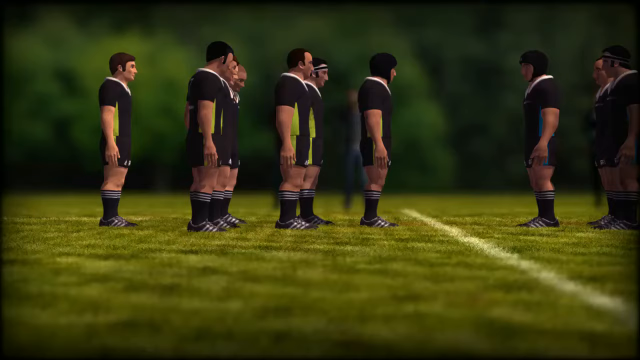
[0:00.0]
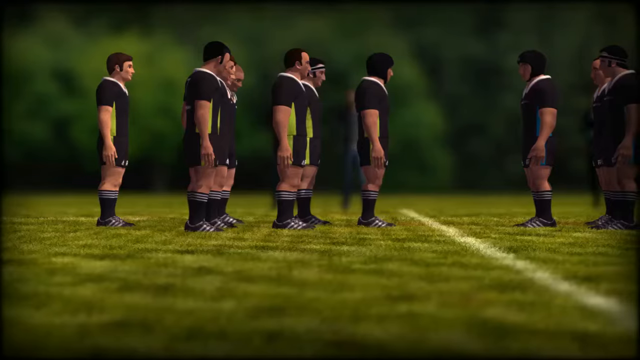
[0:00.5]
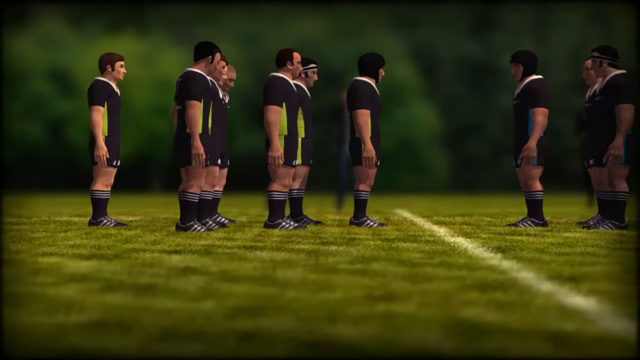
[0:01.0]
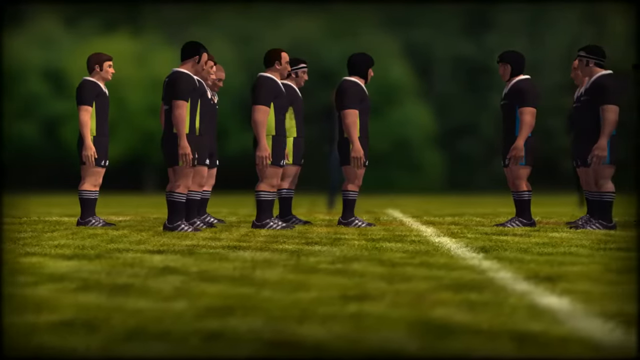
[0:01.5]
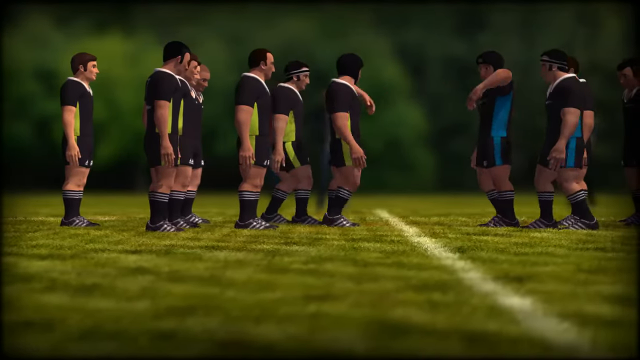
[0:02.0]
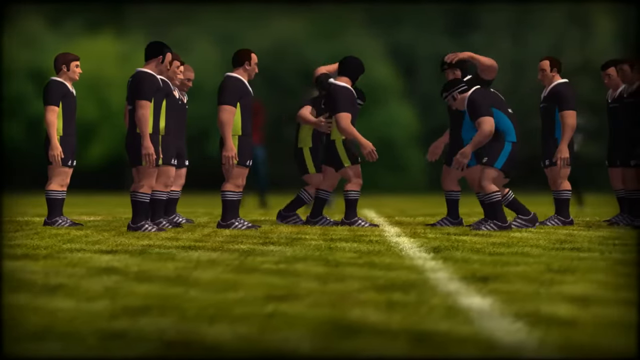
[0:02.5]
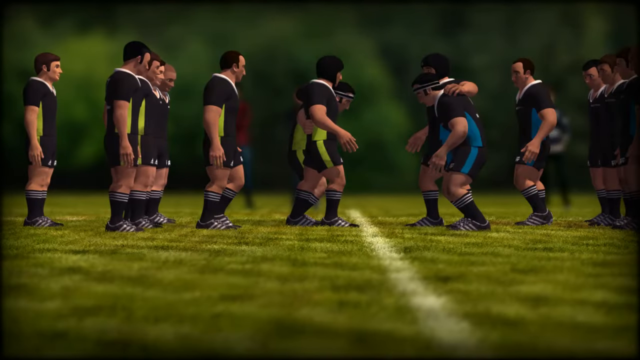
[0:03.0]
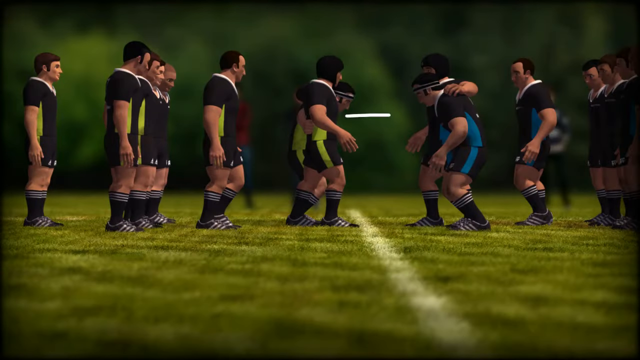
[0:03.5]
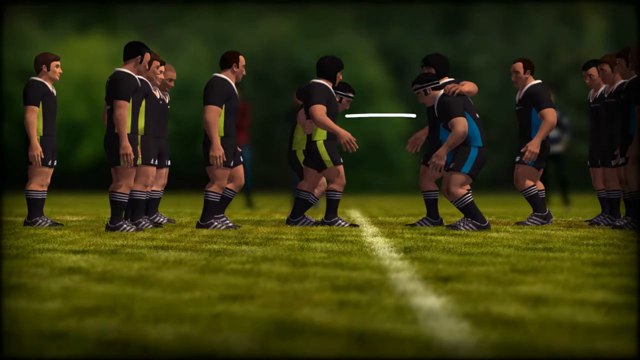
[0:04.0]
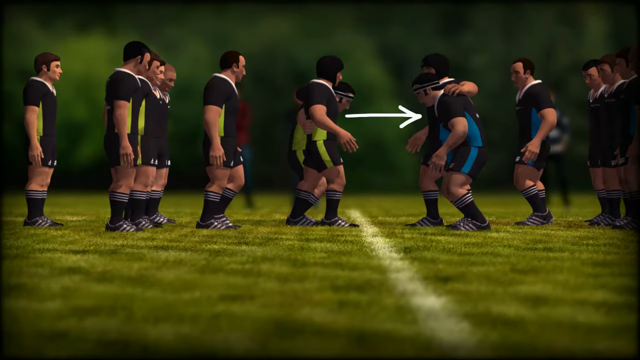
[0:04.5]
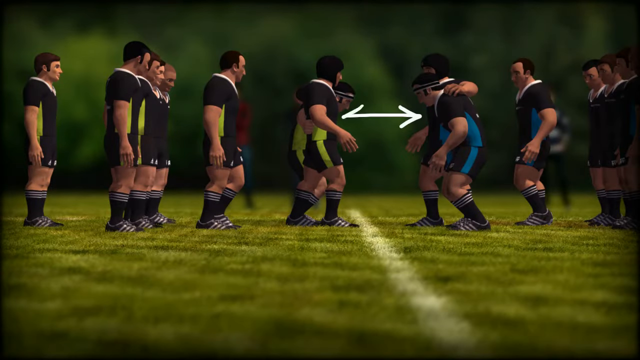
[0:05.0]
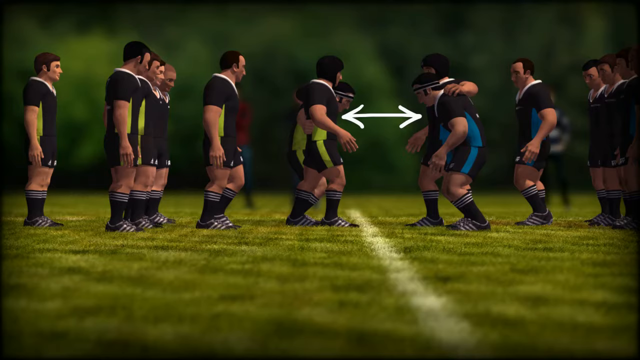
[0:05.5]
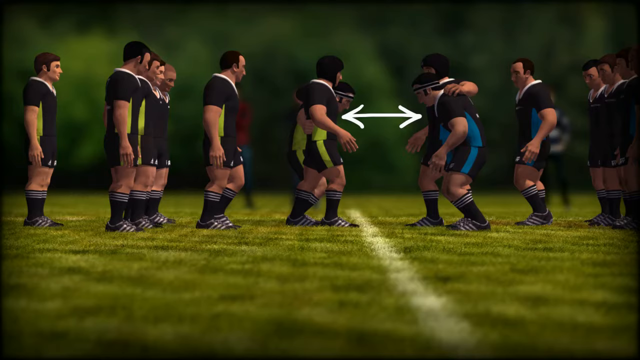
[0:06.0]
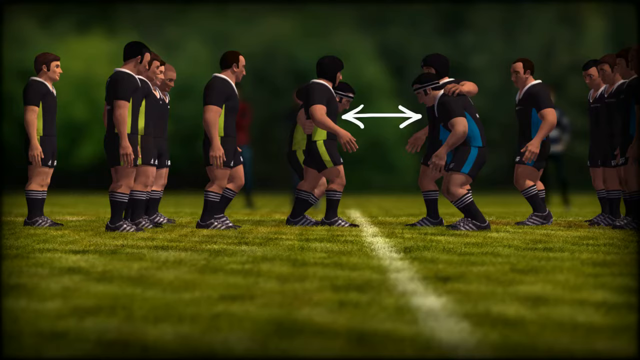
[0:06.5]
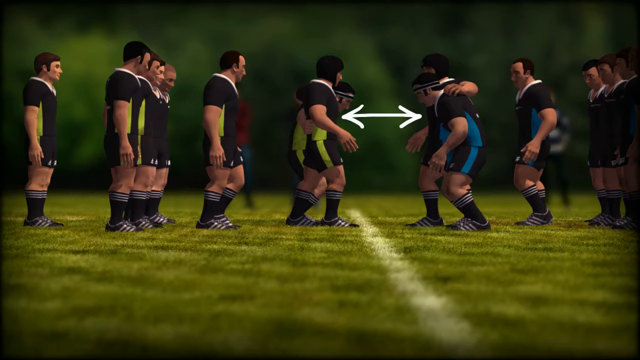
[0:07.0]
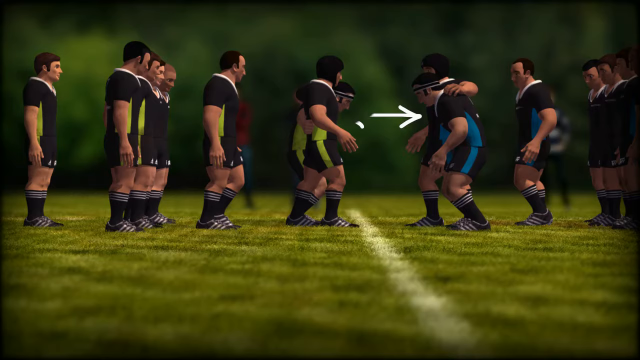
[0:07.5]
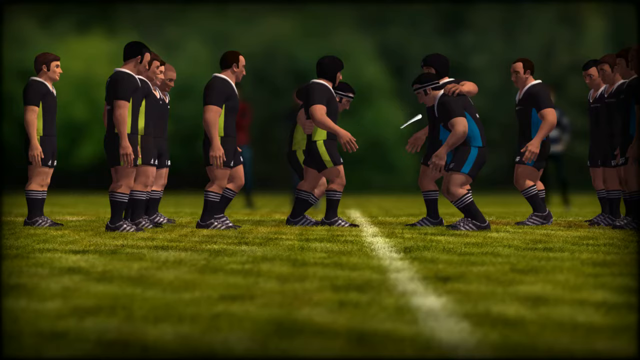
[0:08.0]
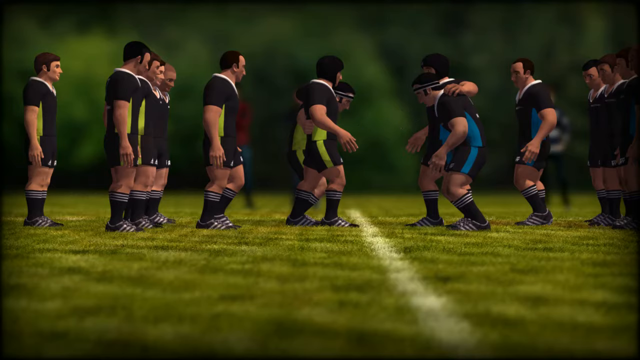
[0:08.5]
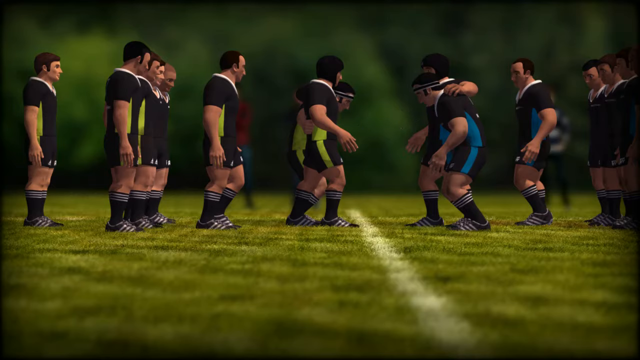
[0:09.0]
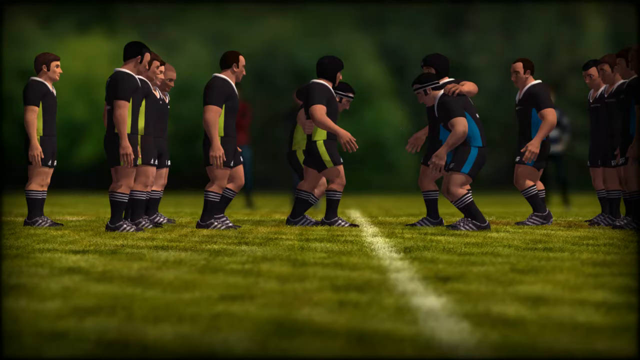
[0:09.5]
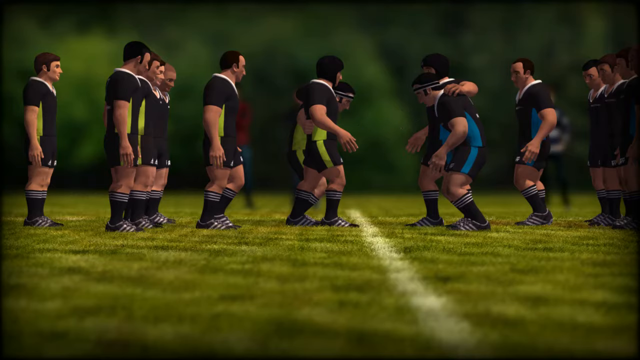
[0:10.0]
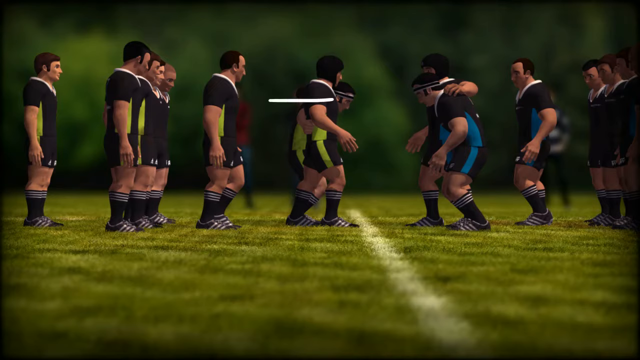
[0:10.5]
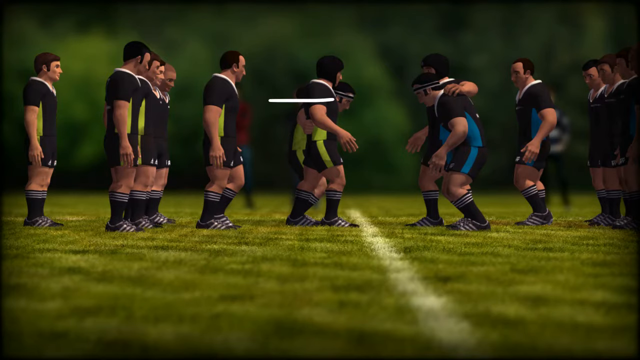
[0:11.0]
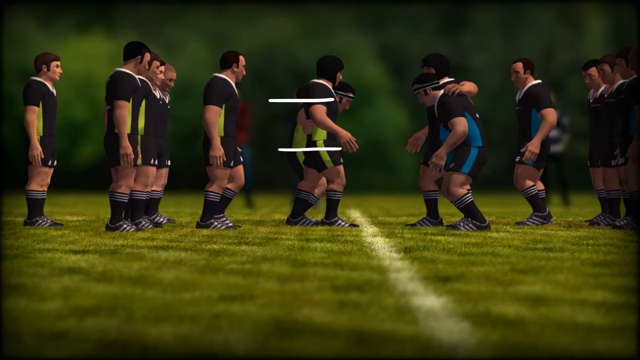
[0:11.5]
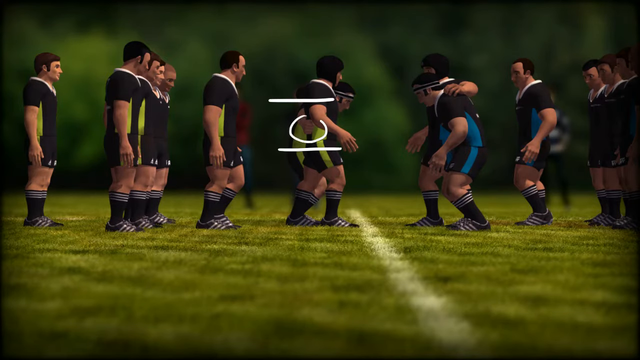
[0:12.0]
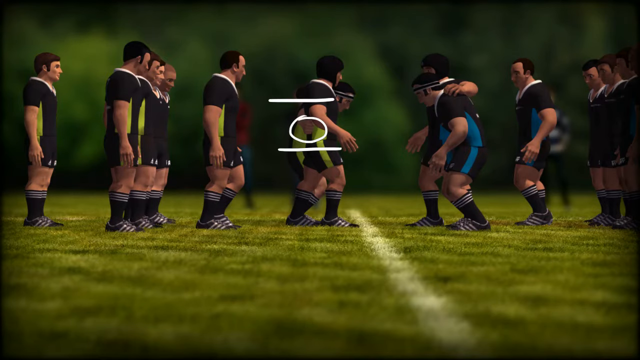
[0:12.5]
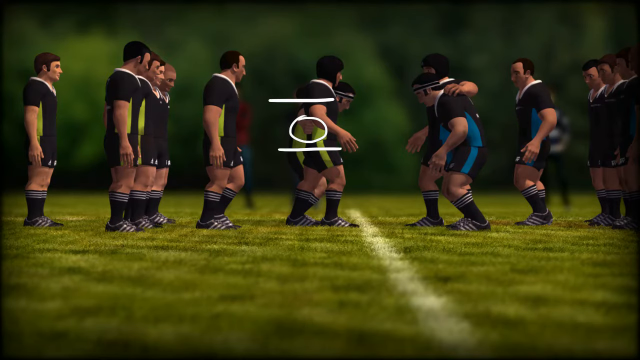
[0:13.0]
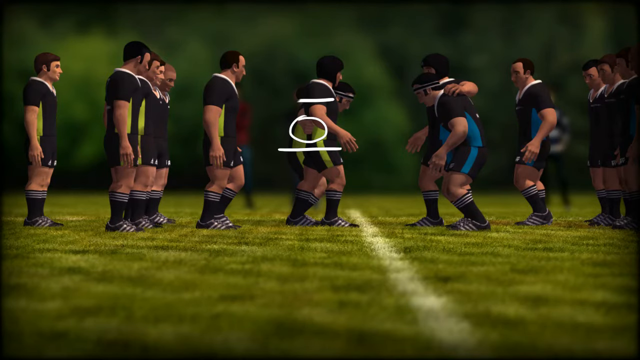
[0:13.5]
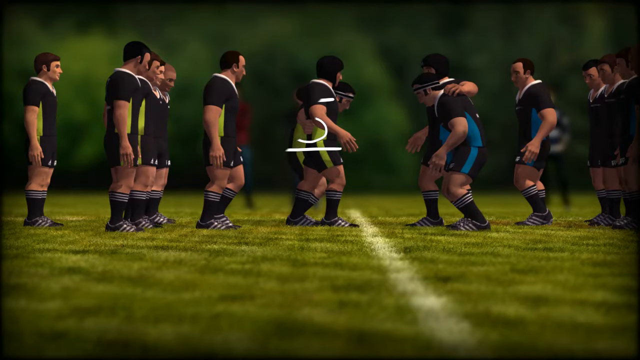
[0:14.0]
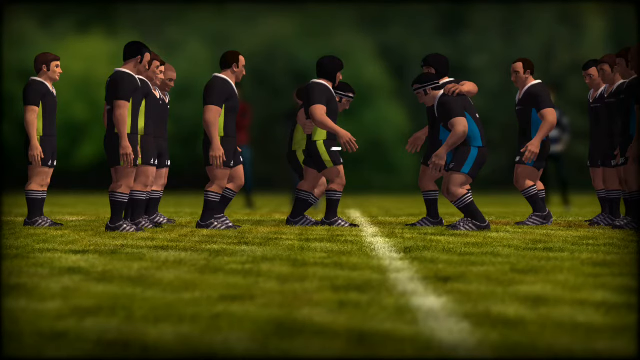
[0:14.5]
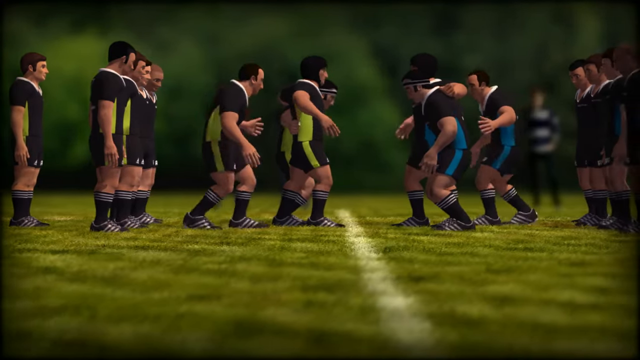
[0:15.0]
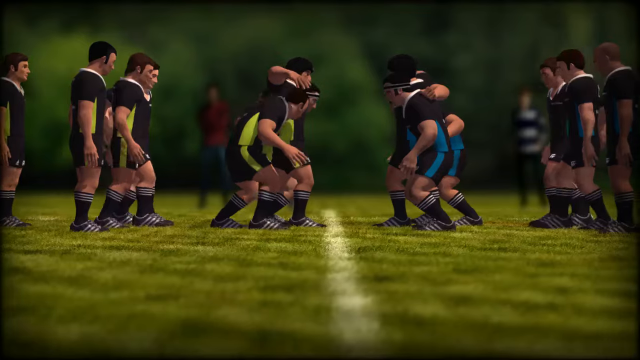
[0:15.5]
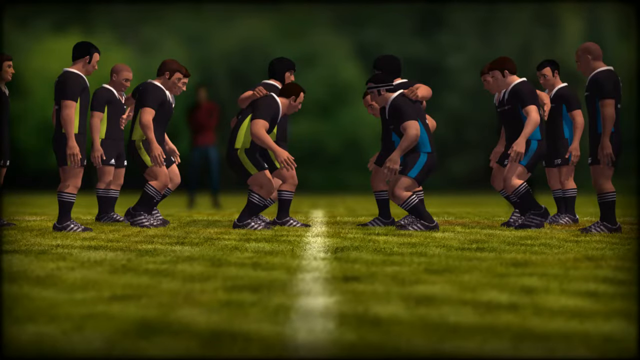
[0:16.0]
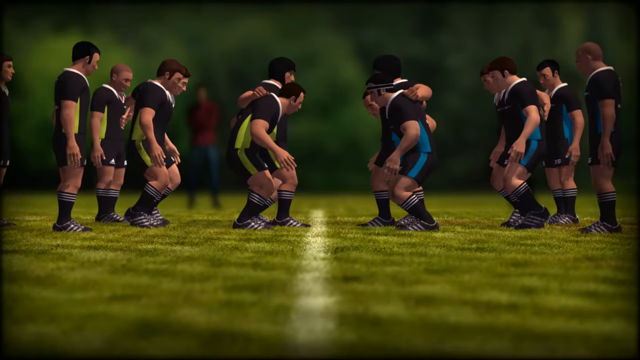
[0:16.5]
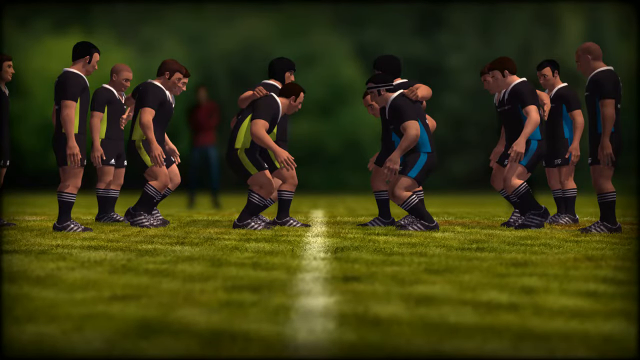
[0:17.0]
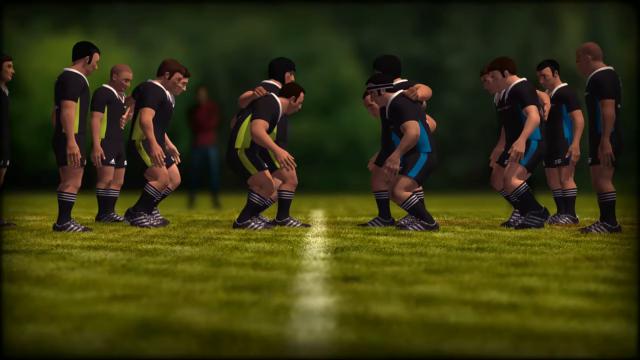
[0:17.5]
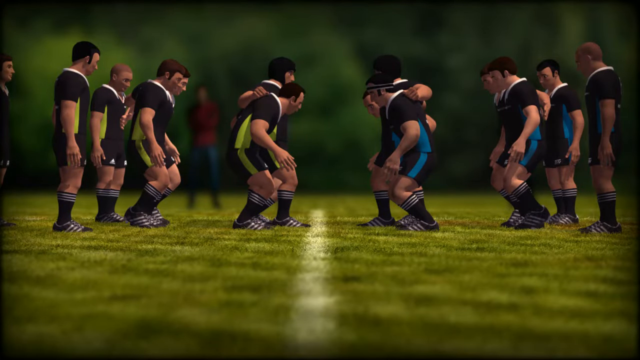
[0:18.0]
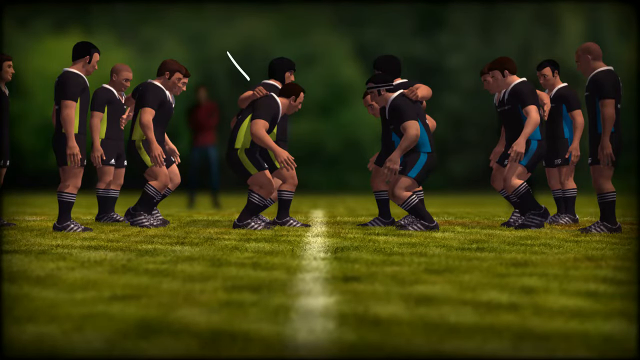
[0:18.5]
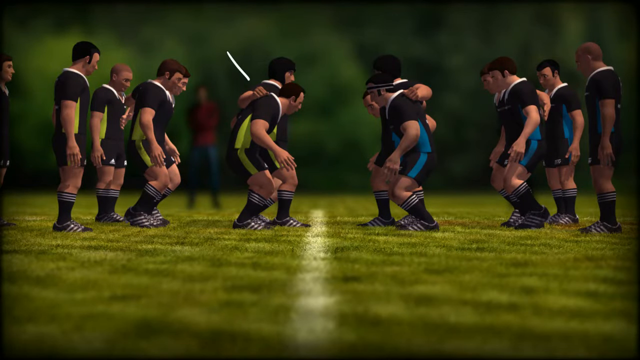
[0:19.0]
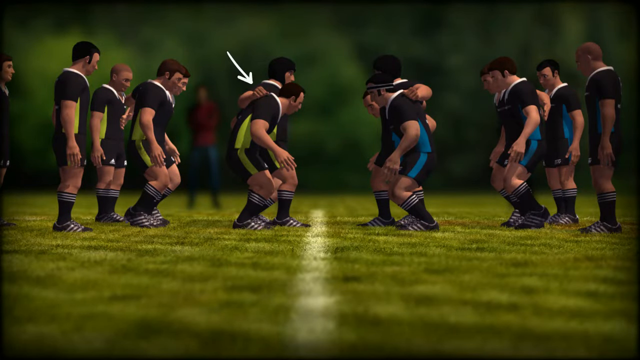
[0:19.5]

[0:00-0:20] The video appears to be an explanation of an action within a rugby union match, shown as a three-dimensional animation of two rugby teams playing against one another. The first team's players wear black shirts and black shorts with green stripes; the second team's players wear black shirts and black shorts with blue stripes. At the beginning, the front rows of both teams interlock with each other, with each team member putting an arm around the shoulder of their own teammate. A two-sided white arrow then appears between the front lines of both teams. Next, two lines are drawn on the first team's front row, with a white circle between those two lines. Some players from the second row then join the first row.